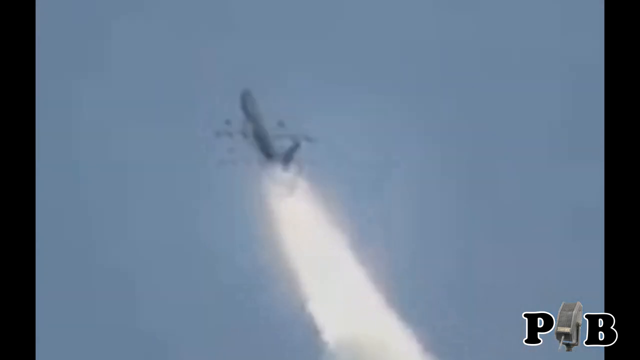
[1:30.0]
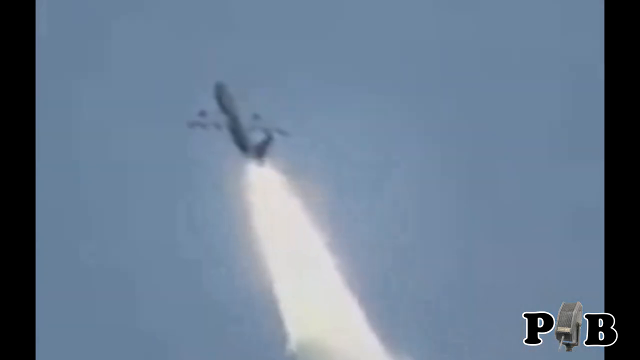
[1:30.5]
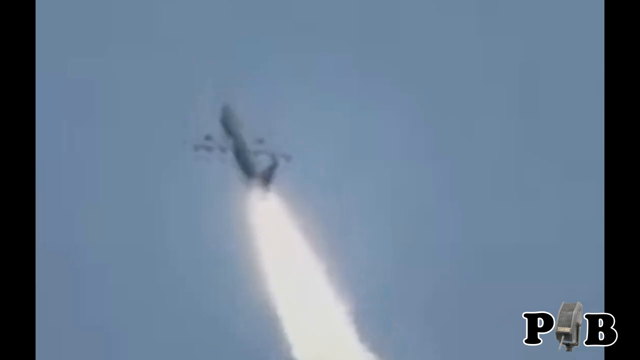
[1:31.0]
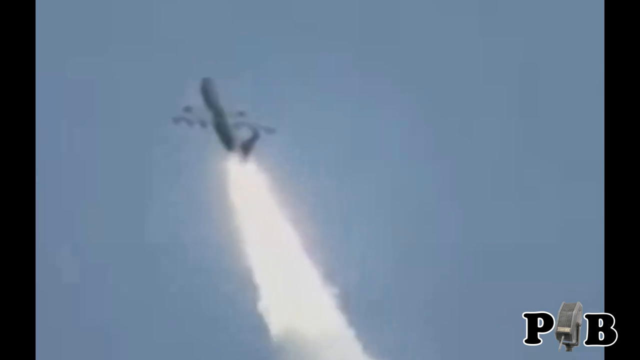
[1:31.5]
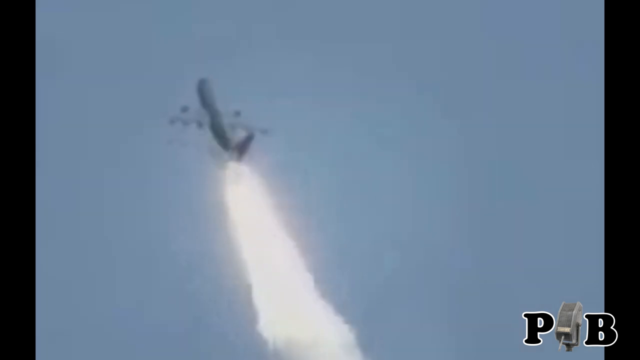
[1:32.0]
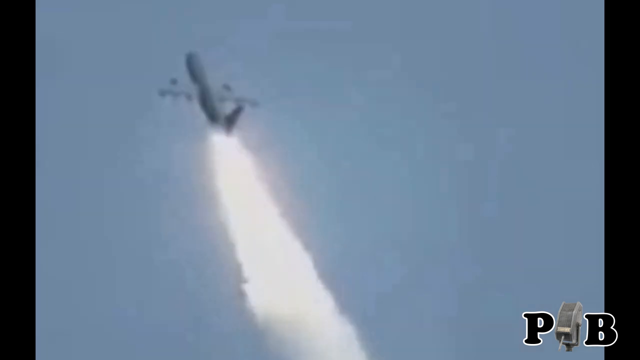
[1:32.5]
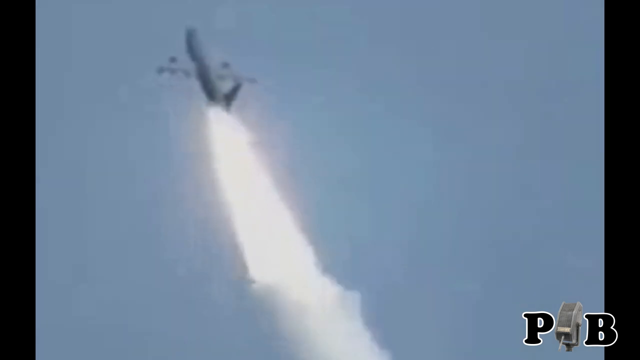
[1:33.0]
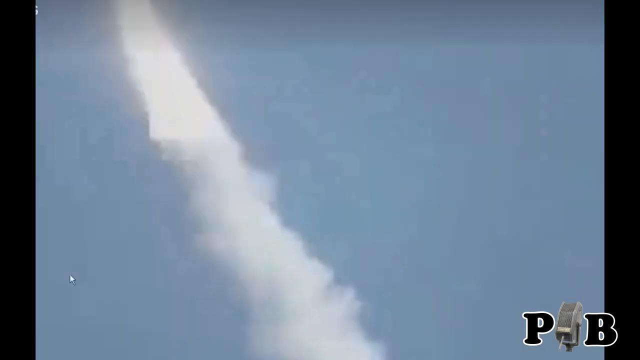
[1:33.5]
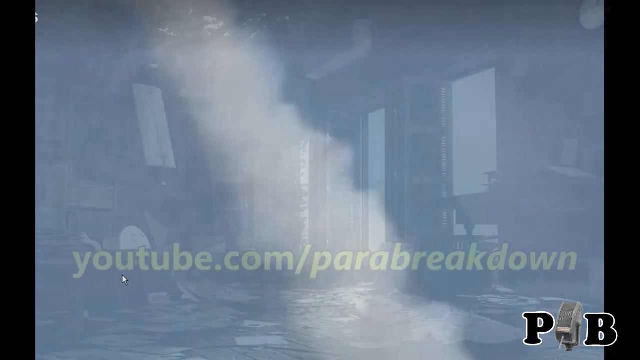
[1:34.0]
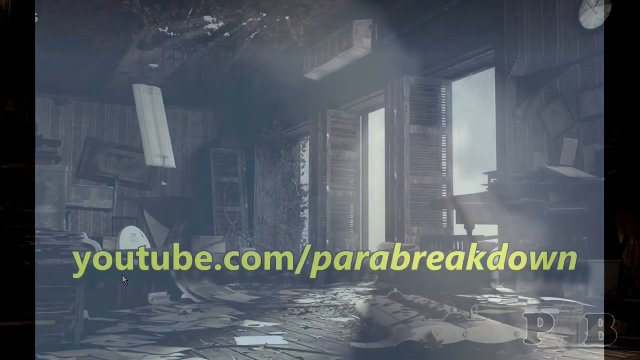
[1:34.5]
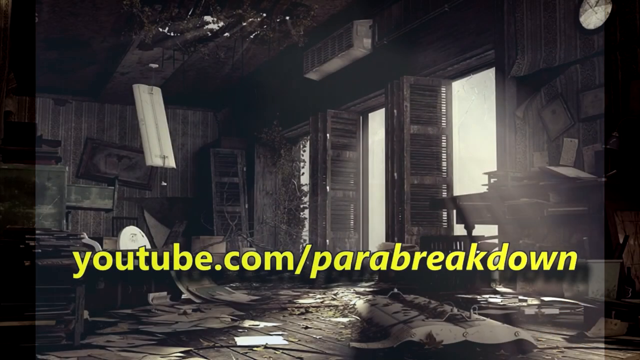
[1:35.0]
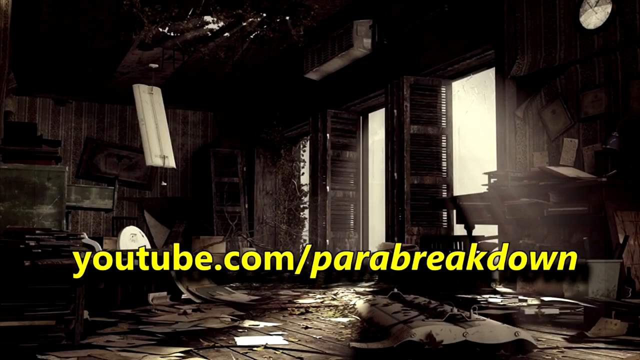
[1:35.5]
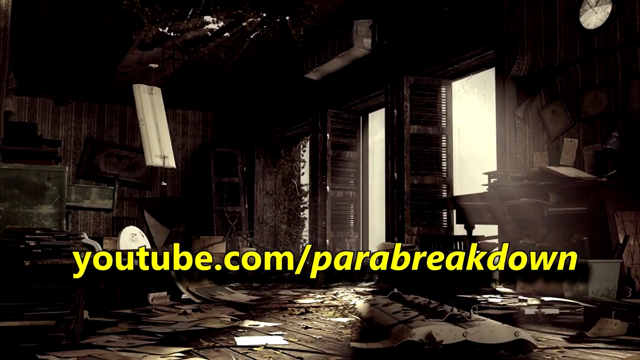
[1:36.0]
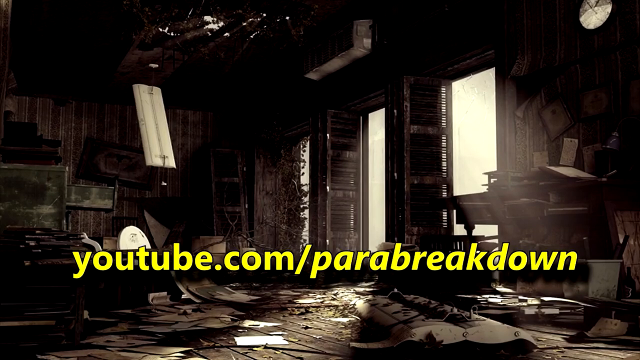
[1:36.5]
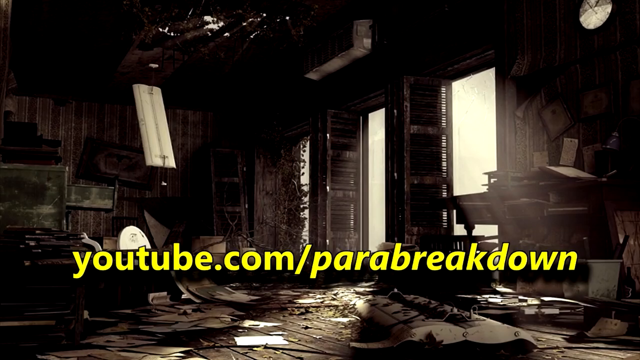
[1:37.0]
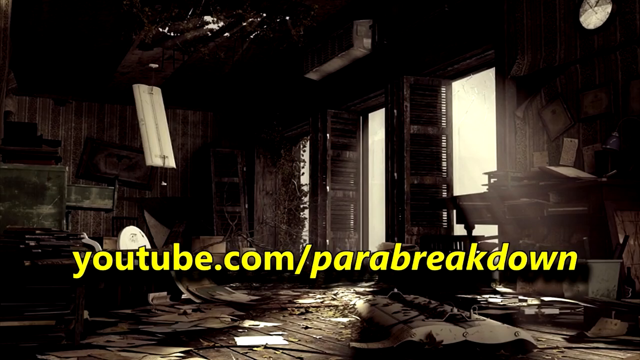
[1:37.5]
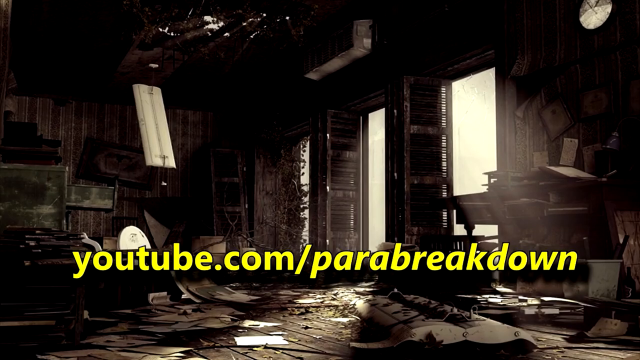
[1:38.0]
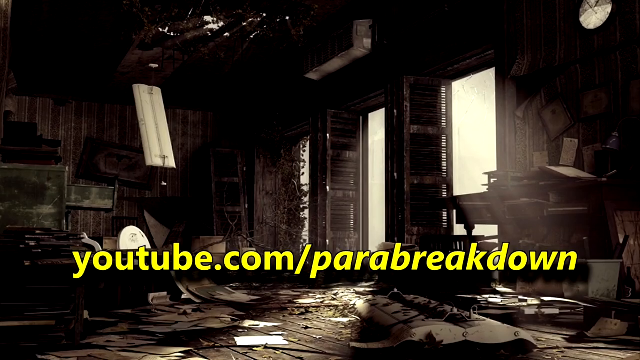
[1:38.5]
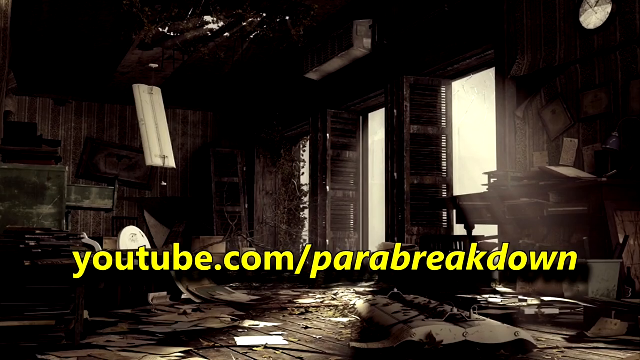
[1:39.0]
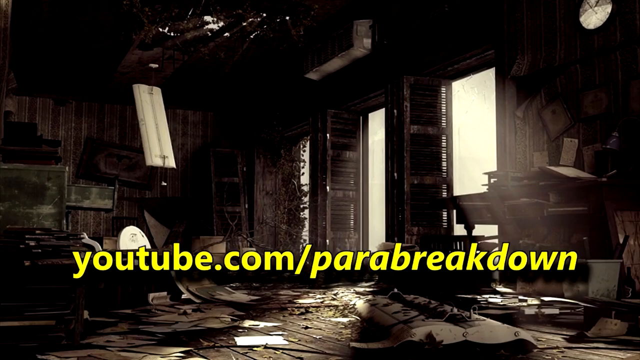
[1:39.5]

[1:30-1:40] A close-up view shows the passenger plane in the air, ascending immediately toward the sky and leaving flames from its tail in a warm color, not exactly white, along with a white trail. The view then switches to a room that looks abandoned: the windows and shutters are open, the ceiling is broken, and a lamp barely hangs from the ceiling. Sunlight comes through the window, and there is an old table or a piano on the right.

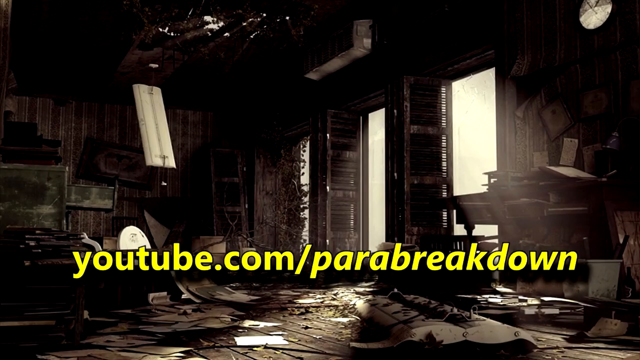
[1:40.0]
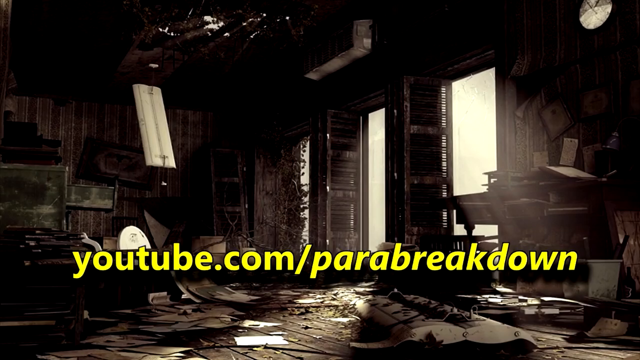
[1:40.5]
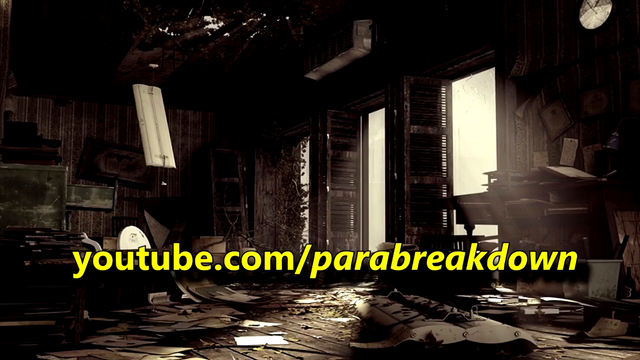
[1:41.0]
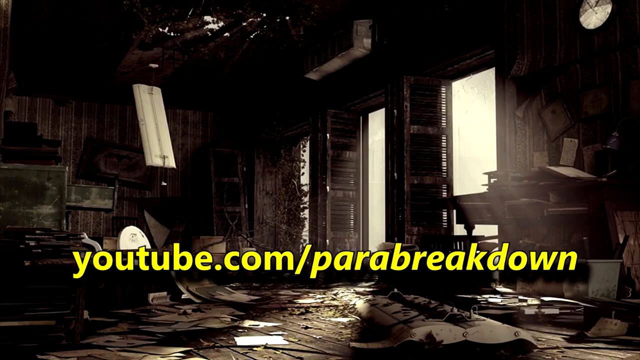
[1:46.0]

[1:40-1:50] Yellow text reading "youtube.com/para breakdown" appears over the abandoned room in the background. The room has three windows, all open. Through the farthest window, some branches and ivy come inside the room; no plants come through the first two, where the outside is whitish from what seems to be strong sunlight, so the outside cannot be seen. The roof seems to be broken, with sunlight coming in through it as well. A ceiling lamp barely hangs by two connections: one is loose and hanging down toward the floor, while the other barely holds in the ceiling. On the wall, a painting hangs crookedly.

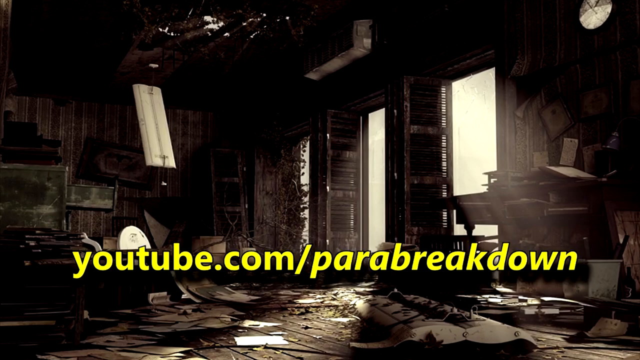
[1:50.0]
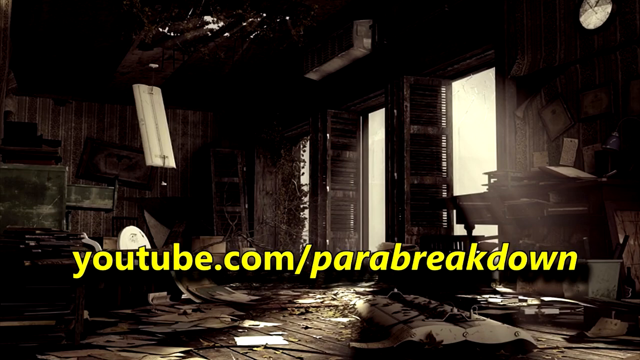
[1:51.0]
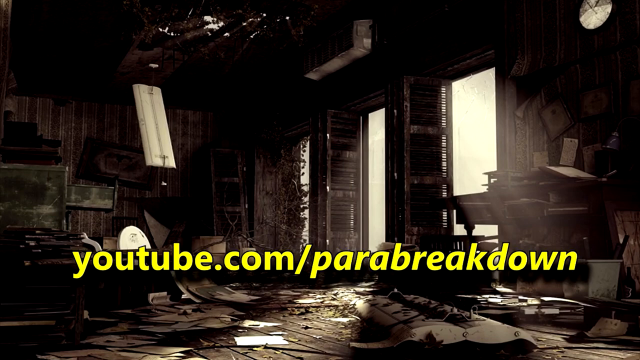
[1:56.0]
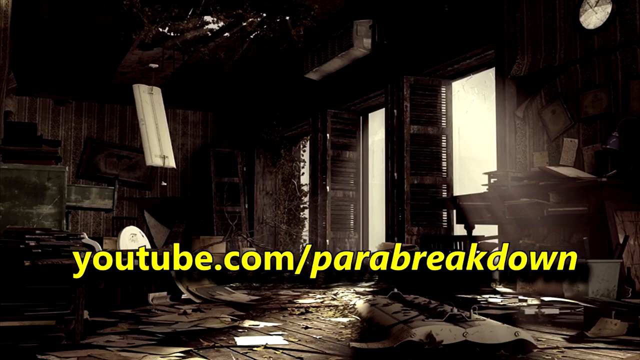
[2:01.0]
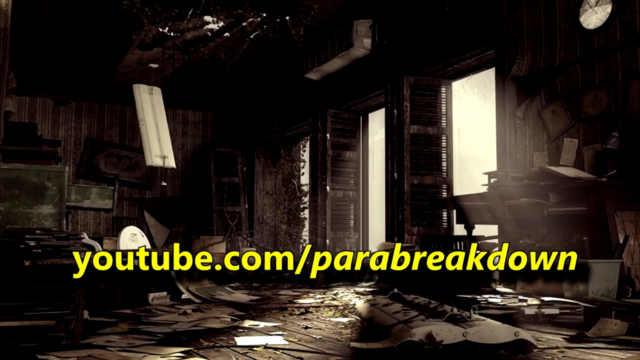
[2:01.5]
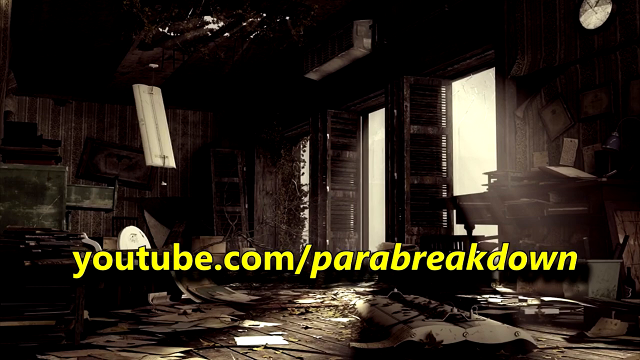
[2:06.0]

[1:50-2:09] The floor of the abandoned room seems to be wooden, and there are many things on top of it that are hard to identify; some seem to be books and some seem to be paper. There are ripped papers, some branches and some plants on the floor, making a mess of many different papers and objects, and one item seems to be part of a sofa or an armchair. On the right-hand side there seems to be a study table, with a chair knocked down on the floor.